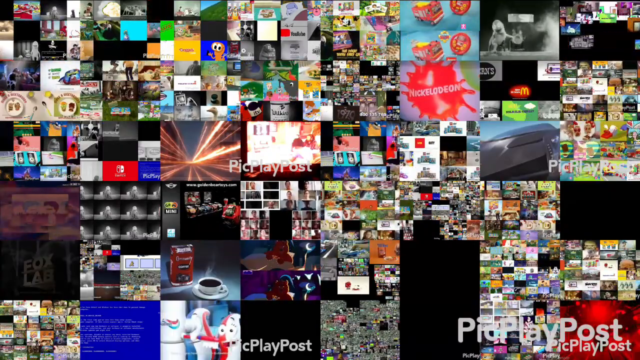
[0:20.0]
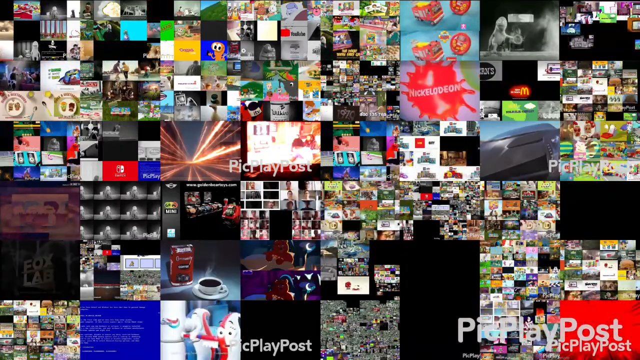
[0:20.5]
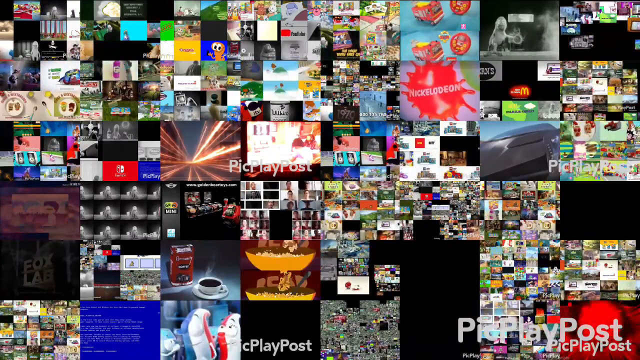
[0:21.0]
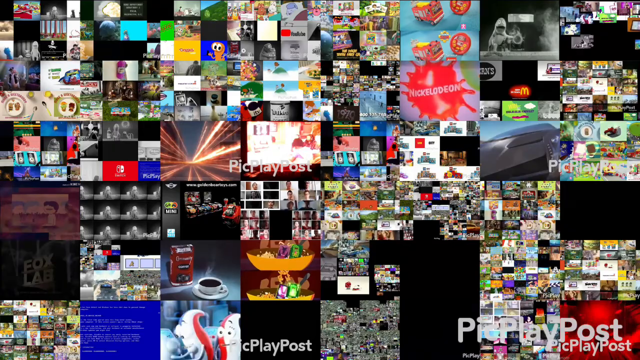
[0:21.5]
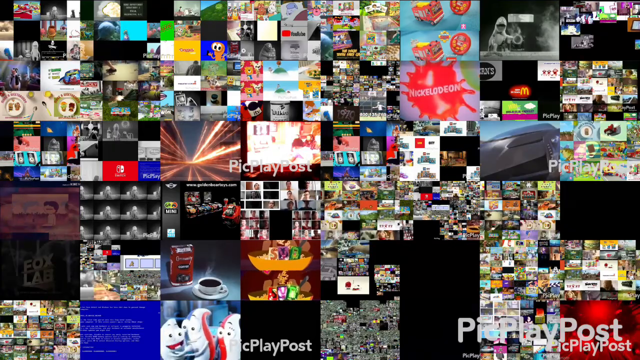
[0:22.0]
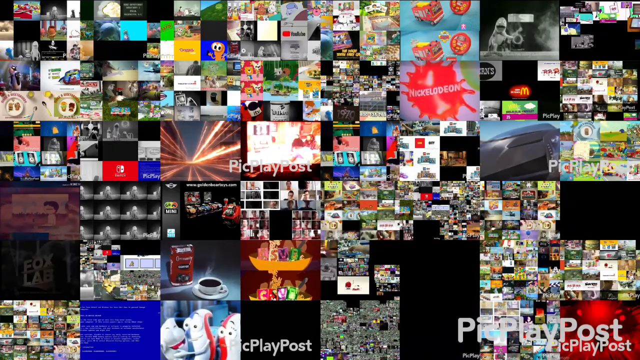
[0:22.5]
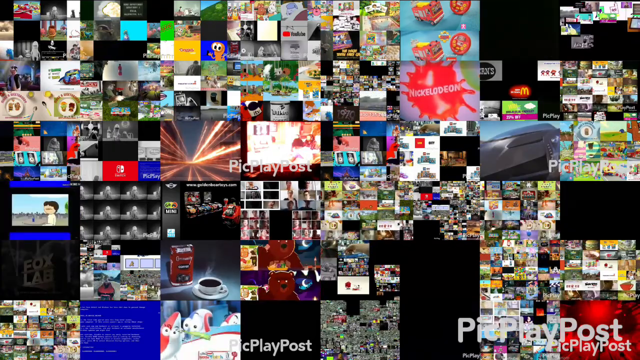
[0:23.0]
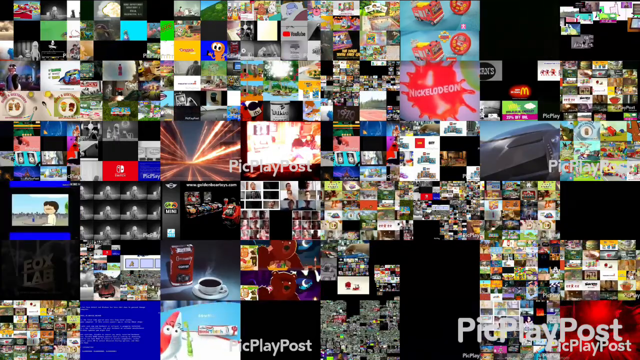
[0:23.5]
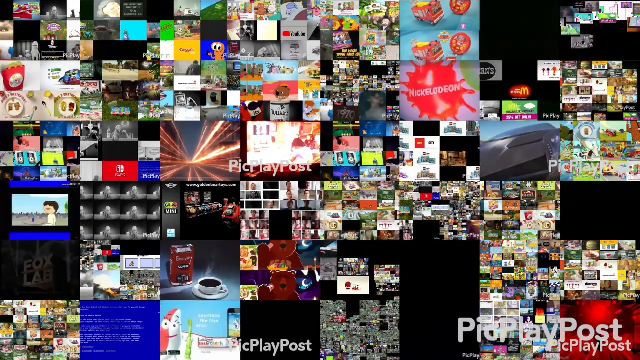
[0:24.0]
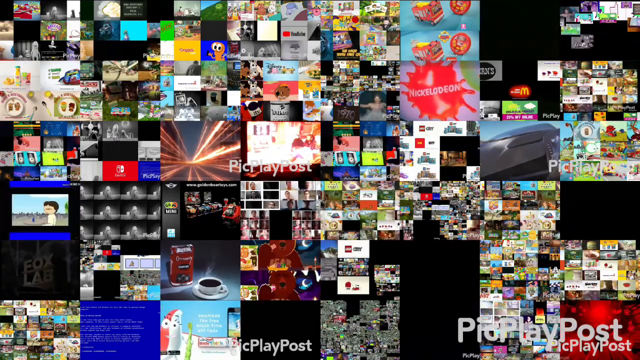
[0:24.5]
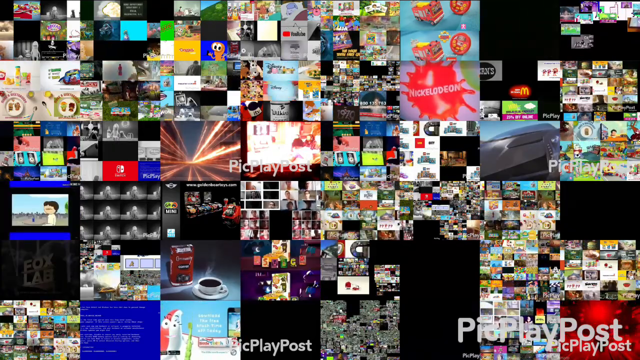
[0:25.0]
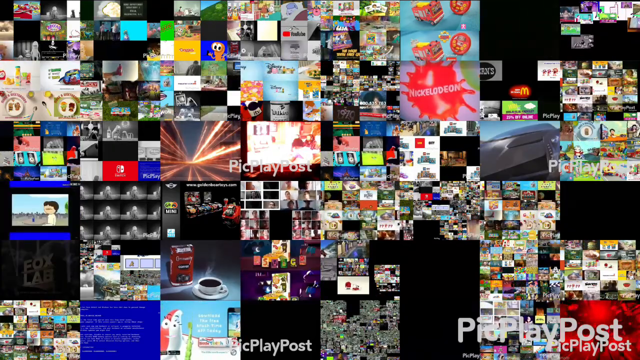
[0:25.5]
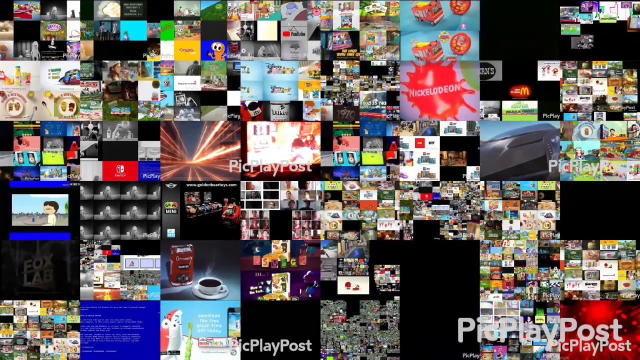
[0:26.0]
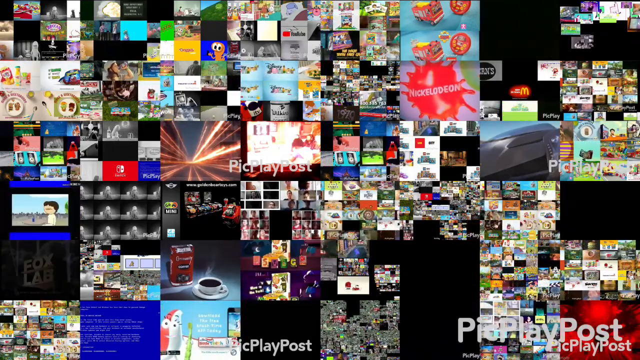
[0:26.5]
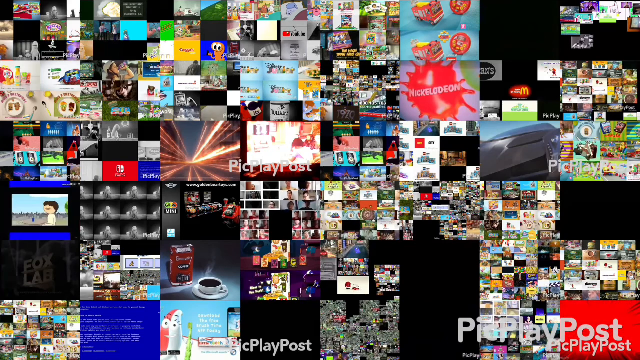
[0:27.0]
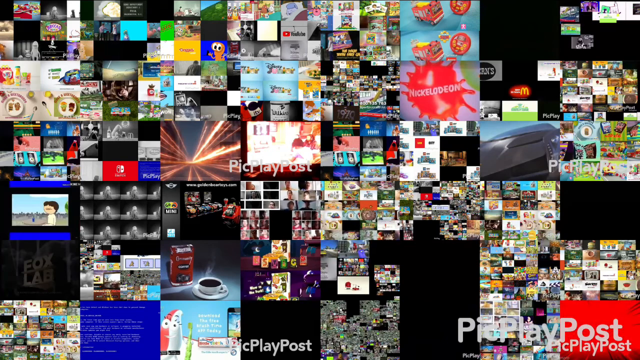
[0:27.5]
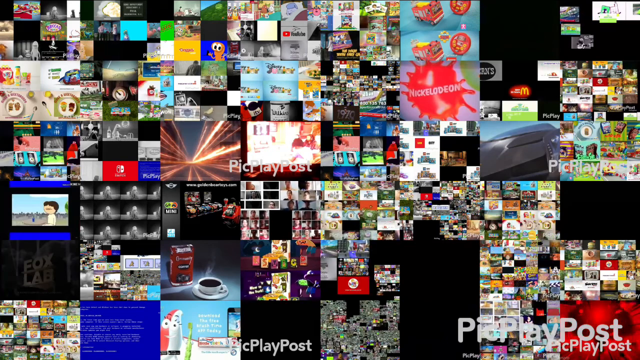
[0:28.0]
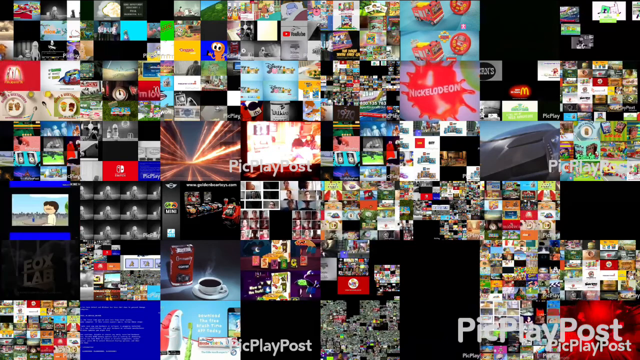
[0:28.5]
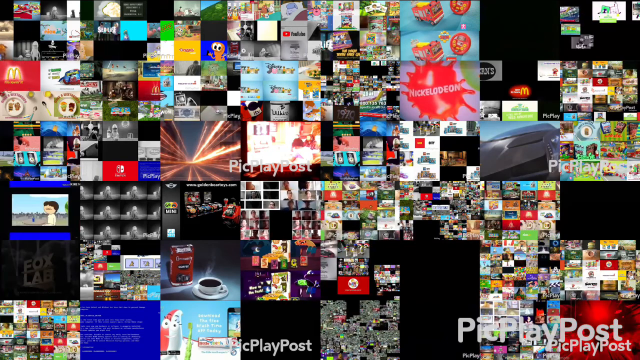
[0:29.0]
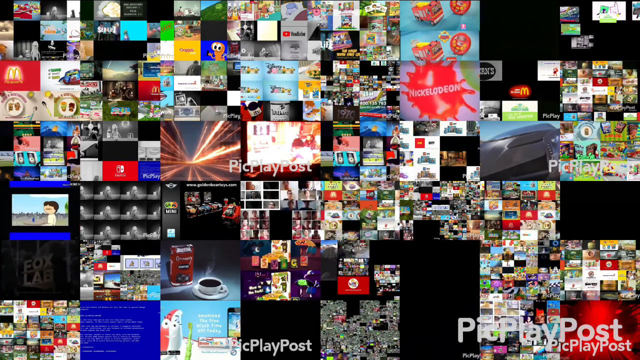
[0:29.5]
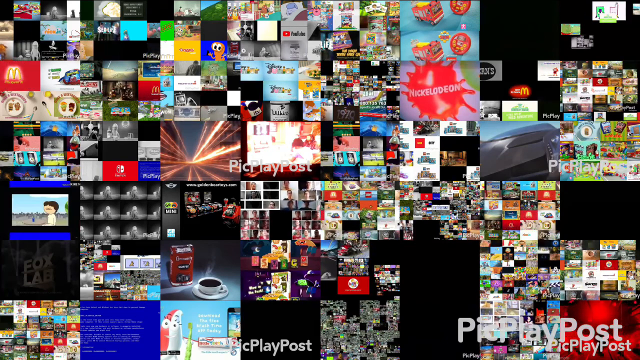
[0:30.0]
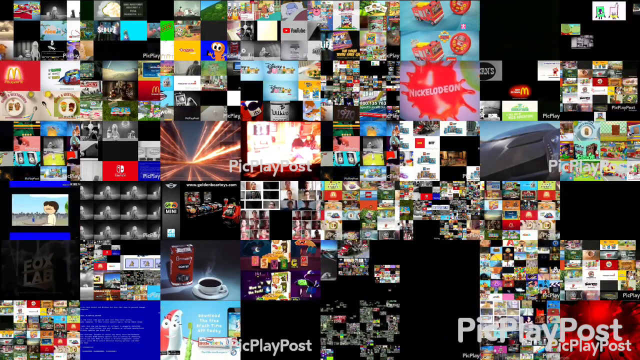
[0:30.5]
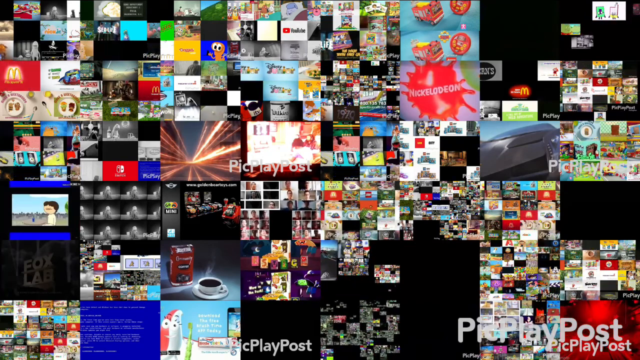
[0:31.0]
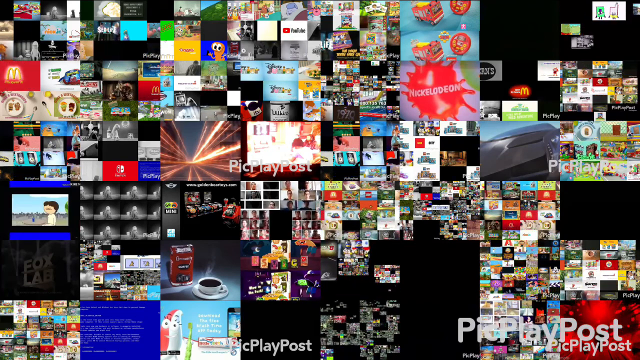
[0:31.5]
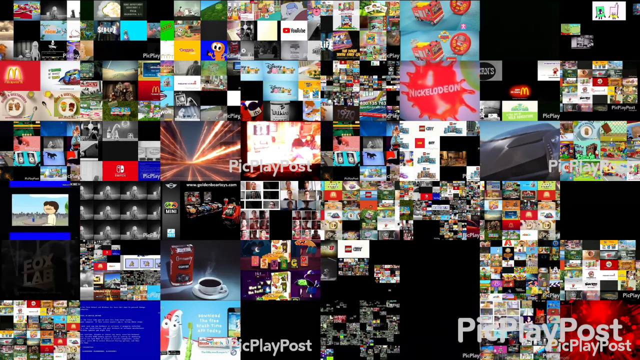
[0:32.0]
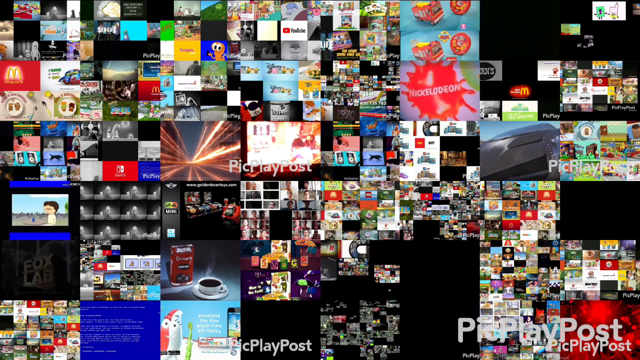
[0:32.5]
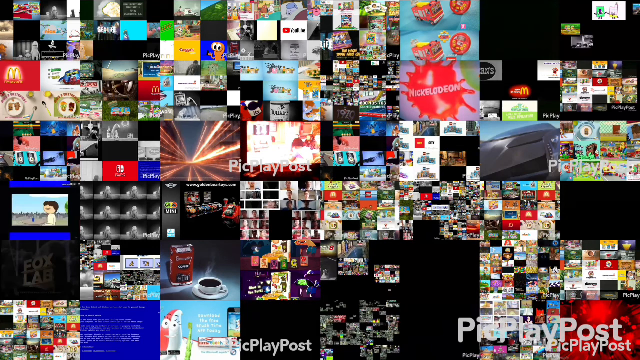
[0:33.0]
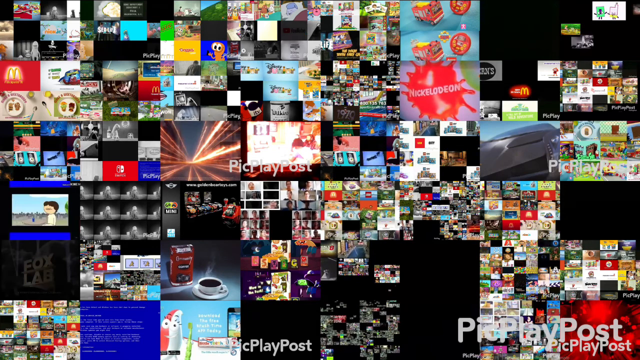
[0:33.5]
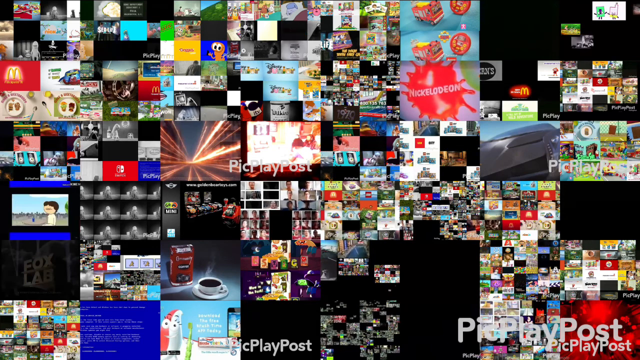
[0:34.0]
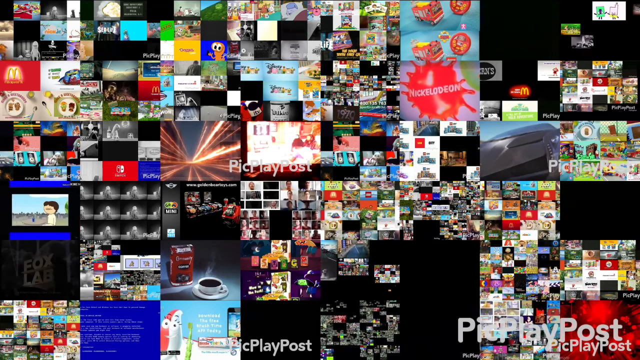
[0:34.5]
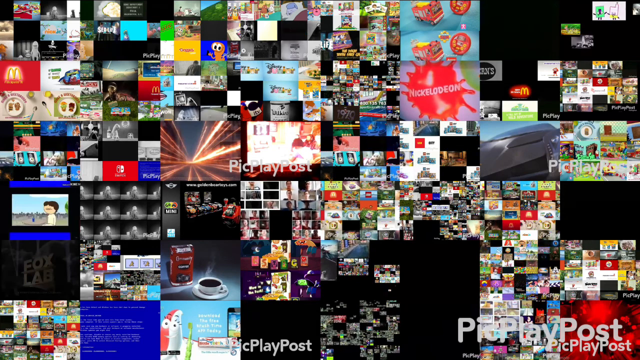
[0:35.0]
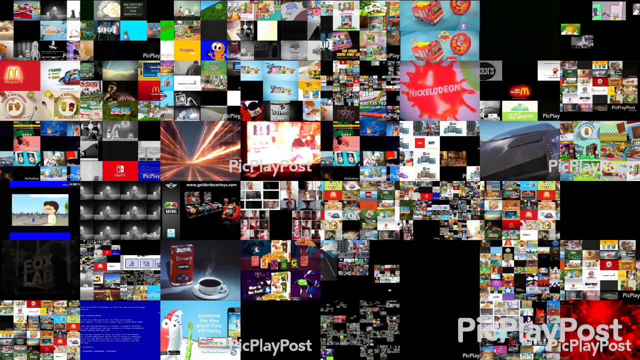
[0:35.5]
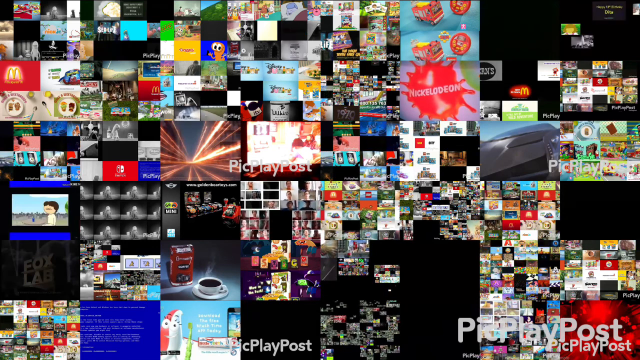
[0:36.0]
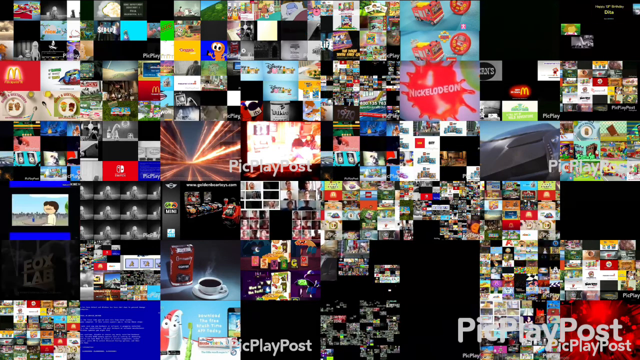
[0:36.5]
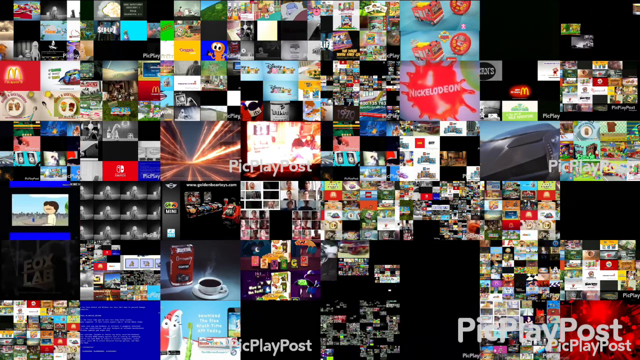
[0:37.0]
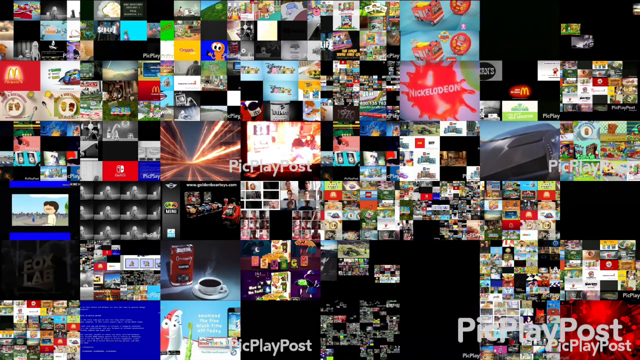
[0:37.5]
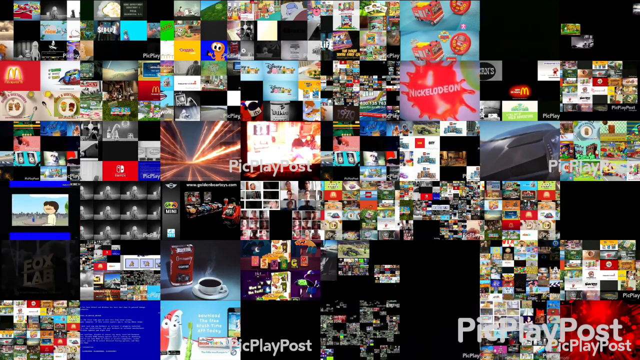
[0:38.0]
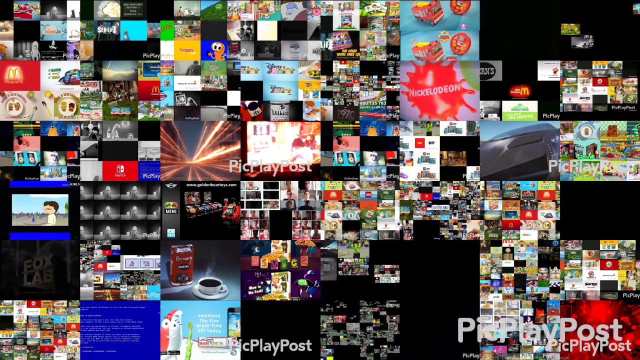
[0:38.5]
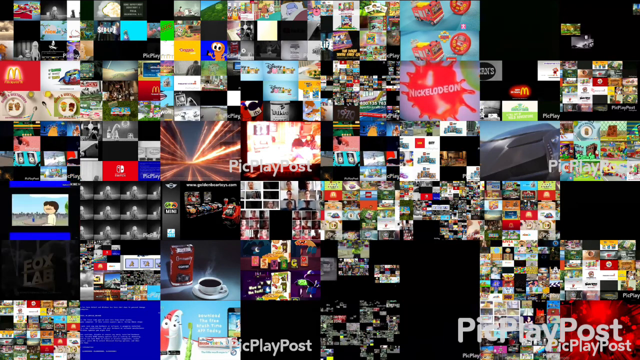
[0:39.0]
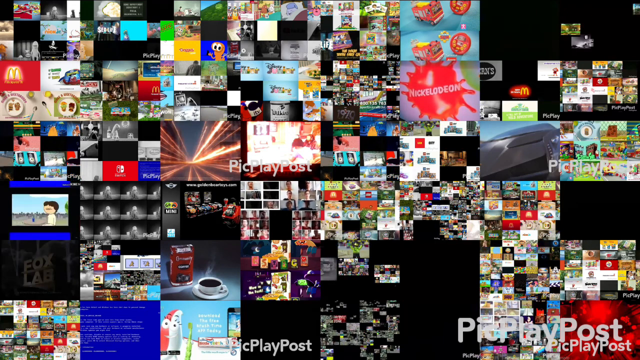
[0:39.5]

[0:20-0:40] The Nickelodeon logo is on the middle right of the video, written in white on a red splash background, as if something like tomato had been splashed there. To the right of it is the McDonald's logo, and the McDonald's logo also appears on the top left of the video. On the right side is gameplay that looks like Super Mario. On the middle left is a picture of a black vehicle that resembles the rival of the cartoon car Lightning McQueen. Along the bottom are scenes from different animations and children's movies and cartoons. On the left side is an icon for a movie industry, Fox Lab, with a darker grey tone and background. At the bottom is a blue screen with white text from one of the films.